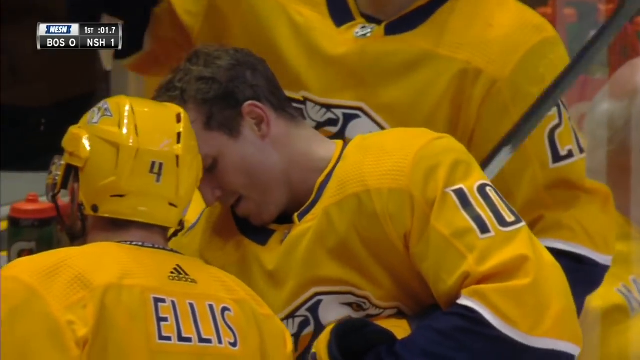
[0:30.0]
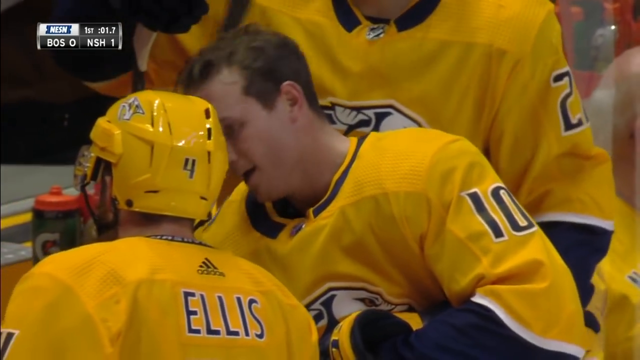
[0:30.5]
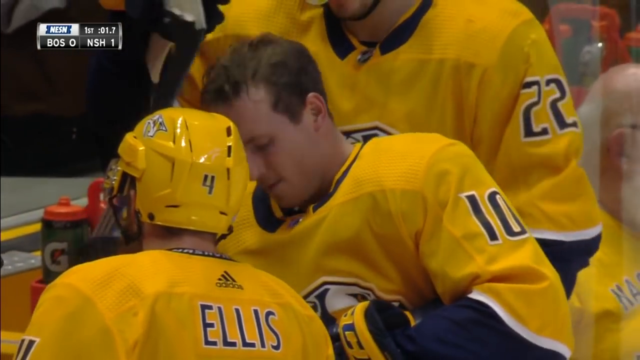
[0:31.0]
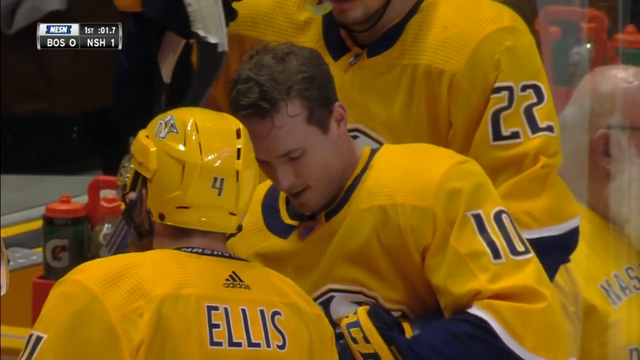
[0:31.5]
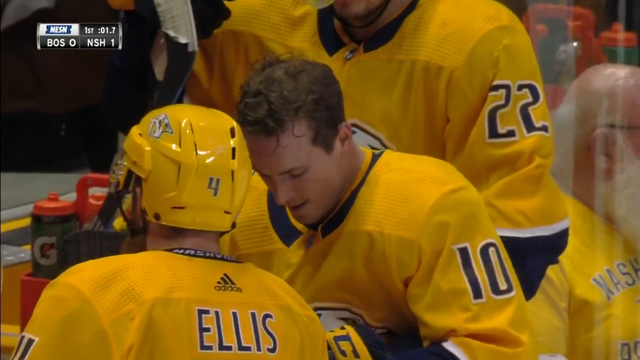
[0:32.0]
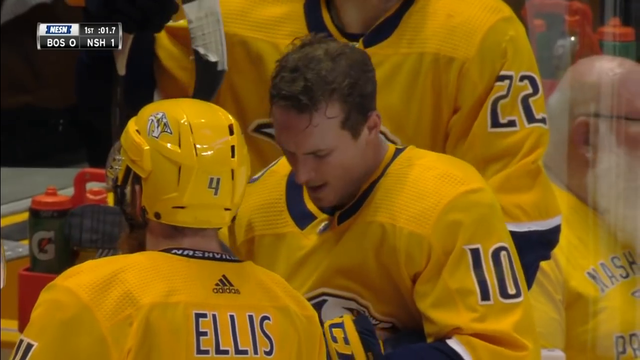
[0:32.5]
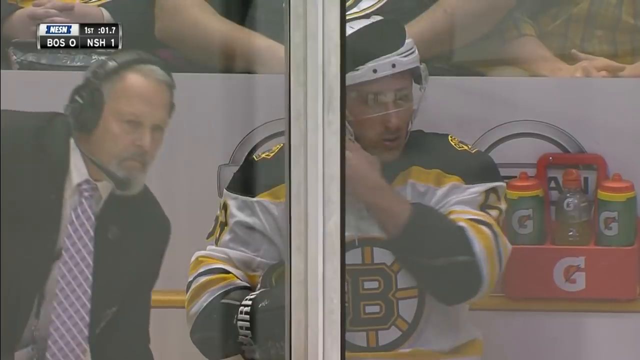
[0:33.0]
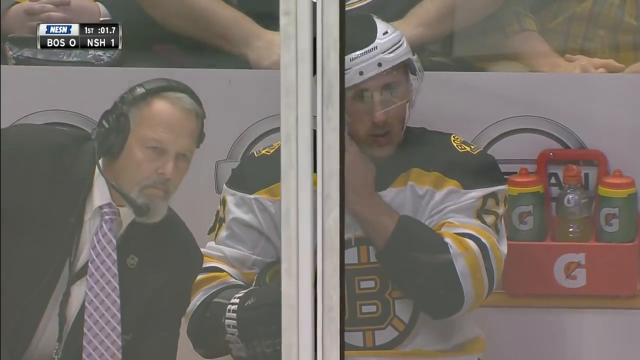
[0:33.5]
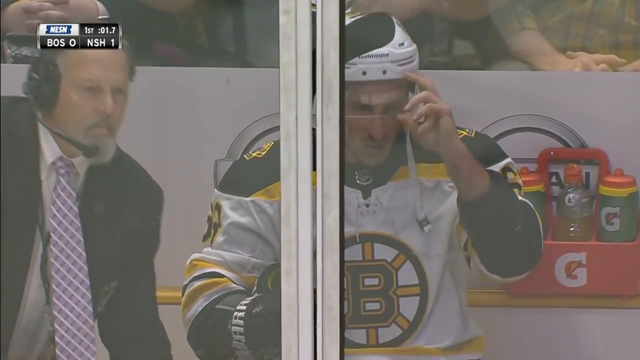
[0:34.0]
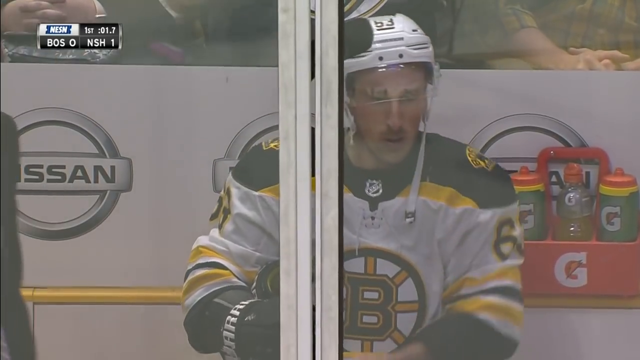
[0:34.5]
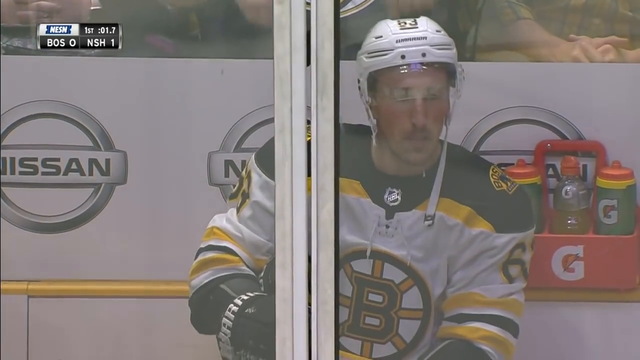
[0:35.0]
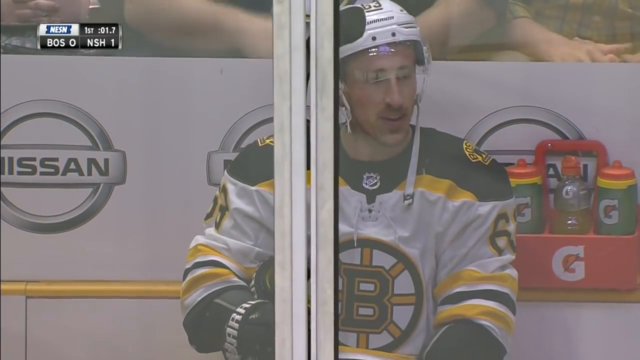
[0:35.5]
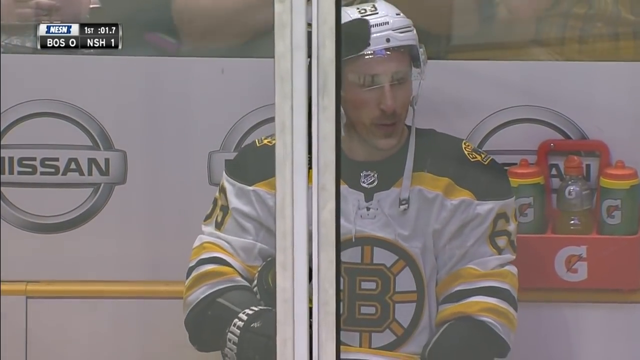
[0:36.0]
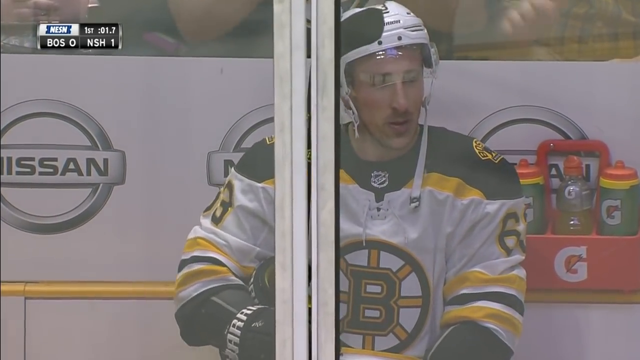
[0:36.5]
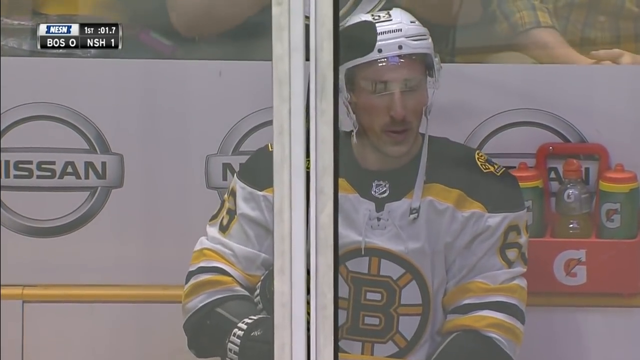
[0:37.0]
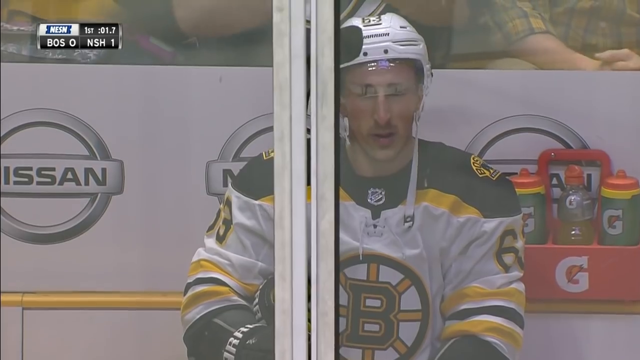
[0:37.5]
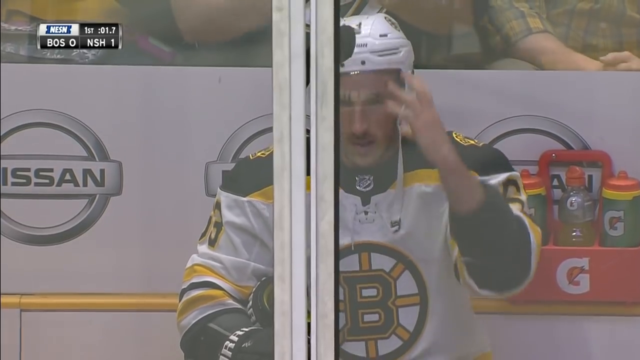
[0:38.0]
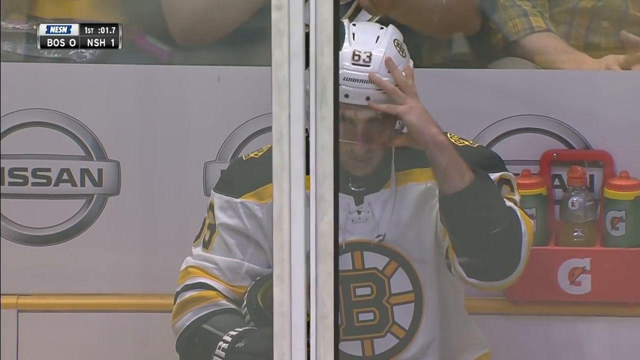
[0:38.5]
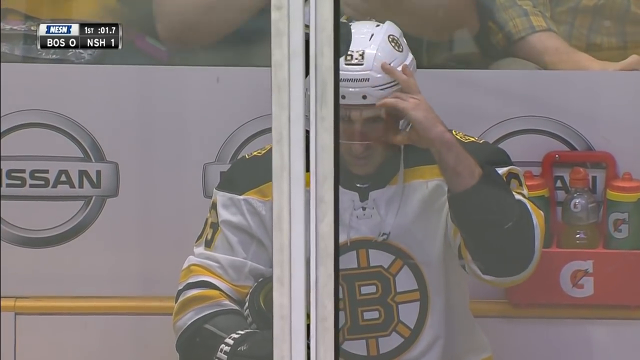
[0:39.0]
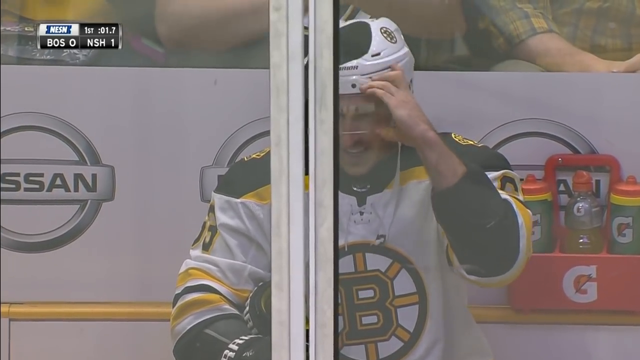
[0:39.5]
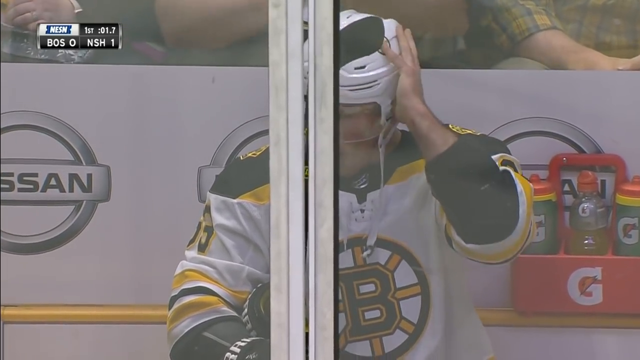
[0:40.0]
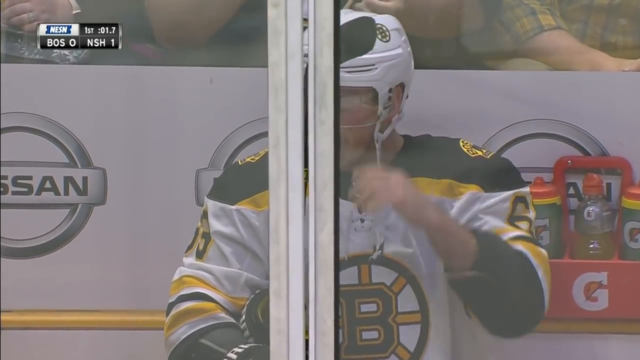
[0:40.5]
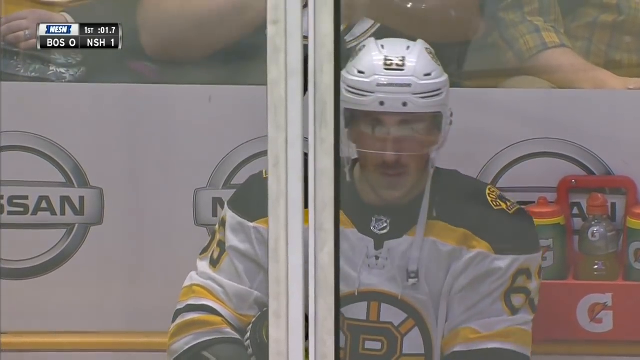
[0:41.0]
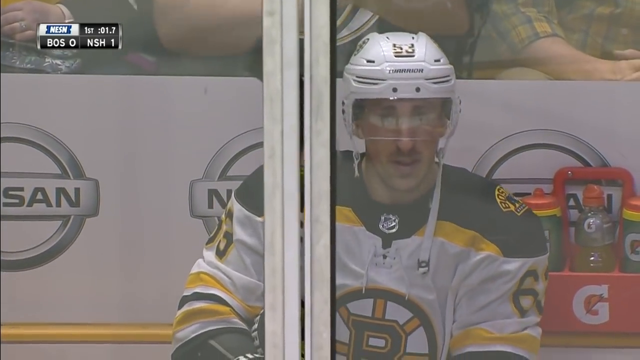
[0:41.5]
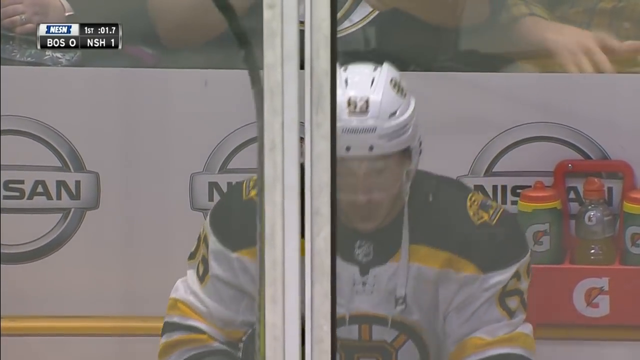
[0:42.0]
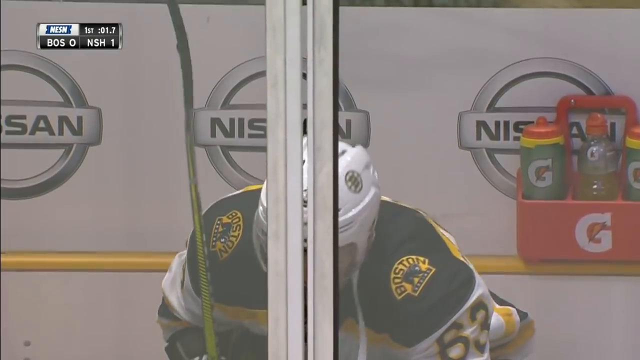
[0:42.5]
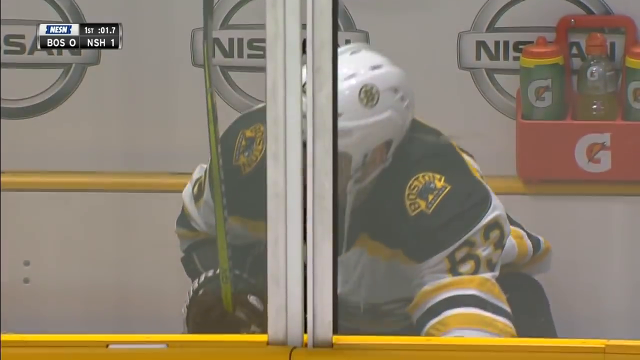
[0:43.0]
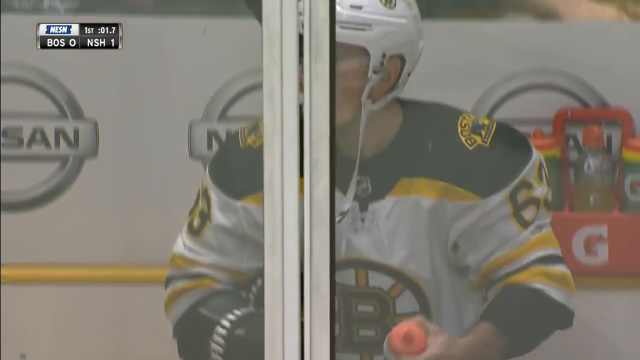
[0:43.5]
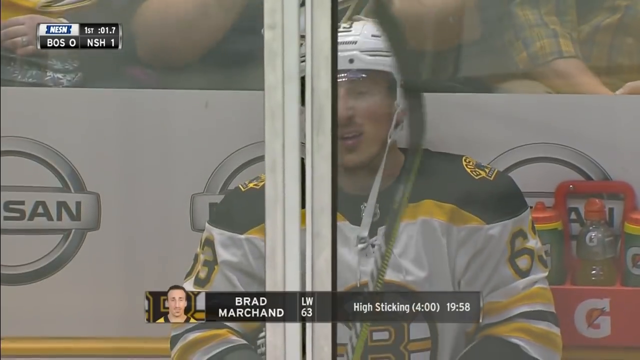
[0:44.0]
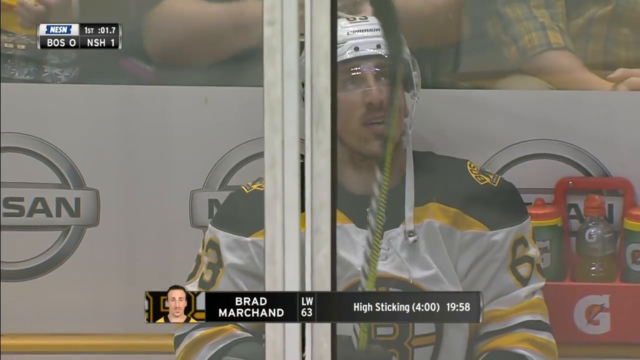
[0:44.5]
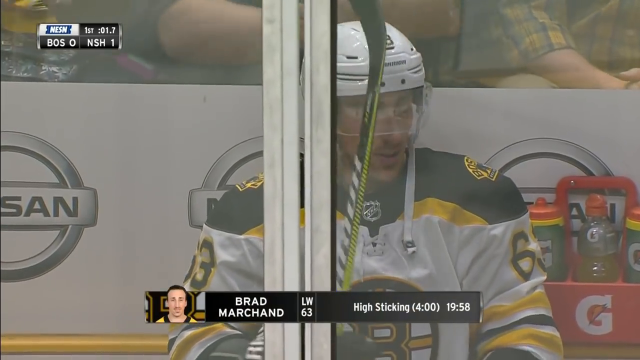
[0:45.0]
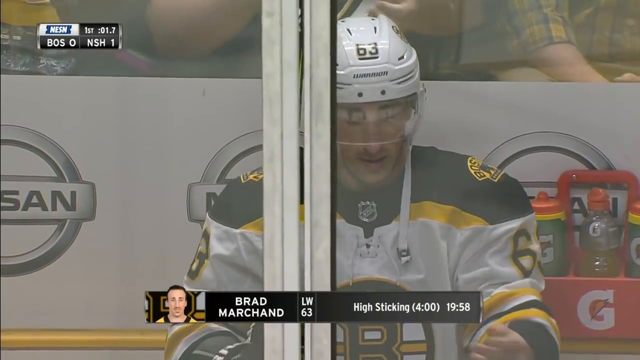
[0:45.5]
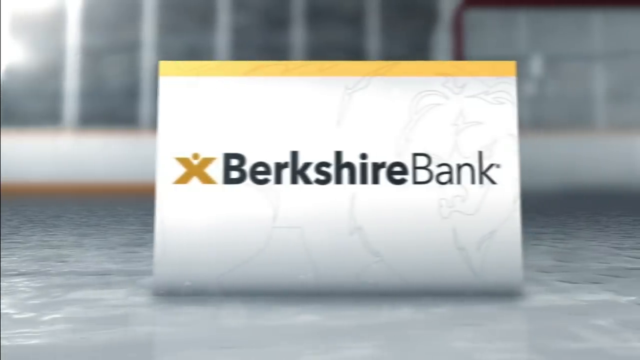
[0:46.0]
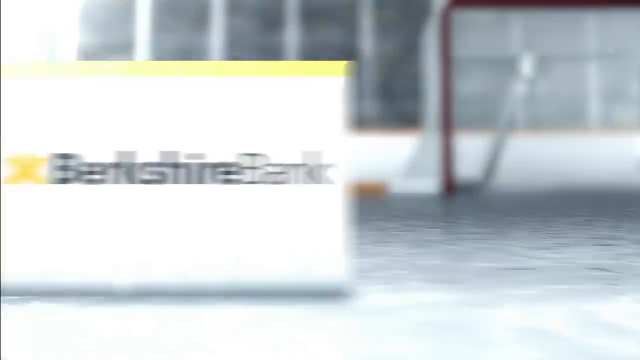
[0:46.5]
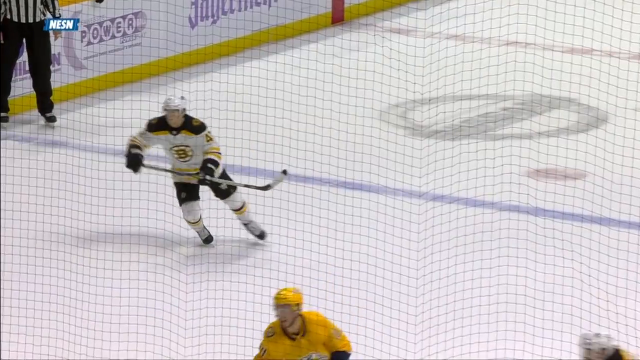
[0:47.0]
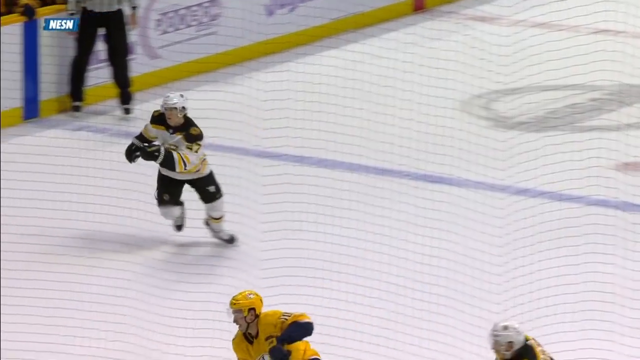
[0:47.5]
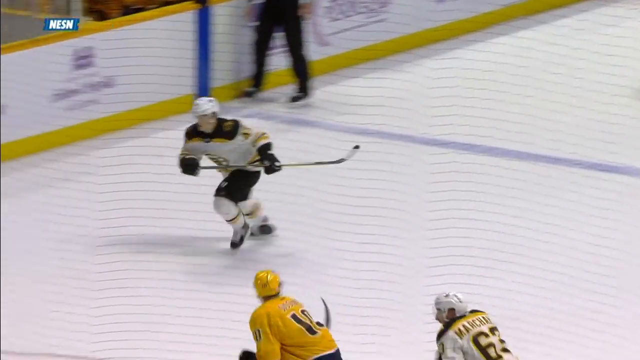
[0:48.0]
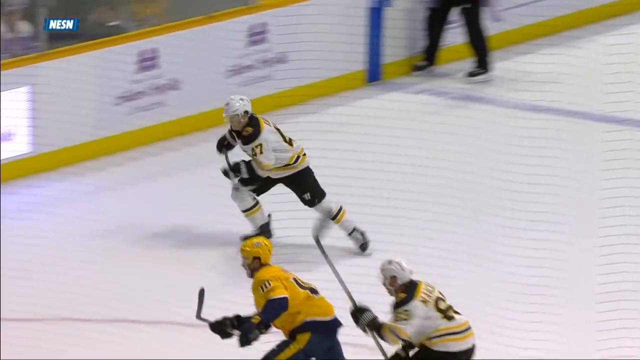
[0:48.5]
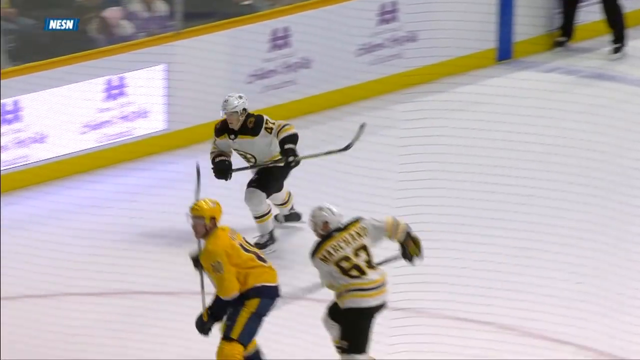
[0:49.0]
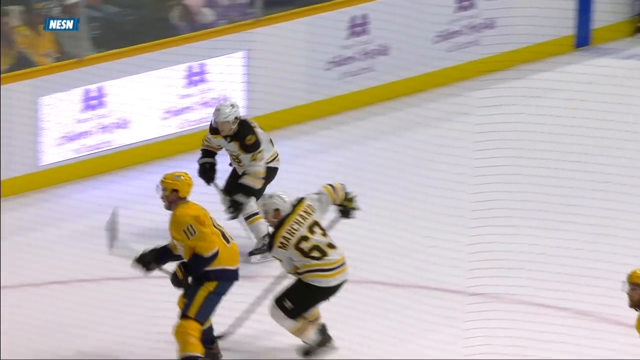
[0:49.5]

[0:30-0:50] A close-up shows the yellow team in their team box. The back of one player's jersey reads "Ellis", and he wears the number 4 on the back of his helmet. In the middle ground is a player without his helmet who wears the number 10 on his sleeve, and behind him is another player with the number 22 on his sleeve. The video returns to the player who skated off the ice grabbing his head. When he goes to sit in the box, a man in a suit closes the gate. He has stepped back into his team box and pulls his helmet up, but not off, and he appears to just sit there with his hockey stick; what he is saying or doing cannot be told. Gatorade is also visible in the box. A replay of what happened then begins.